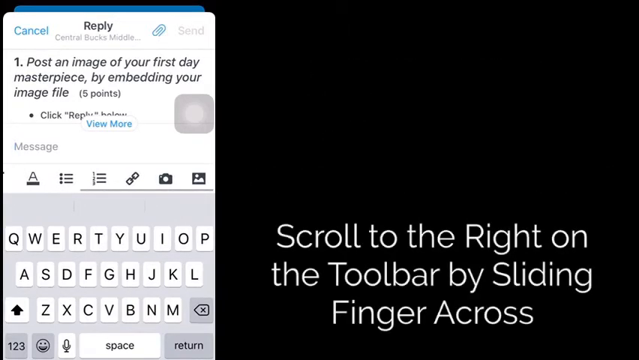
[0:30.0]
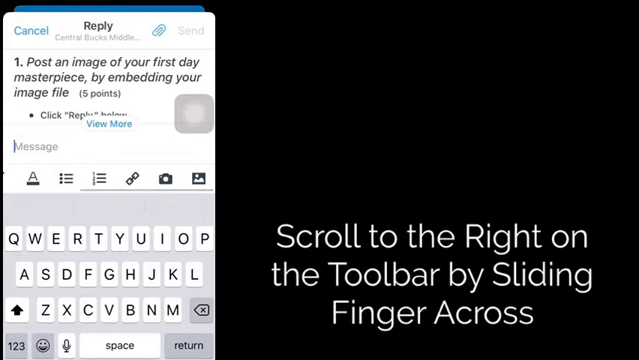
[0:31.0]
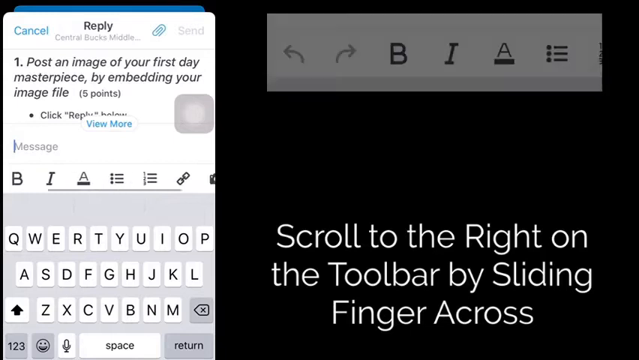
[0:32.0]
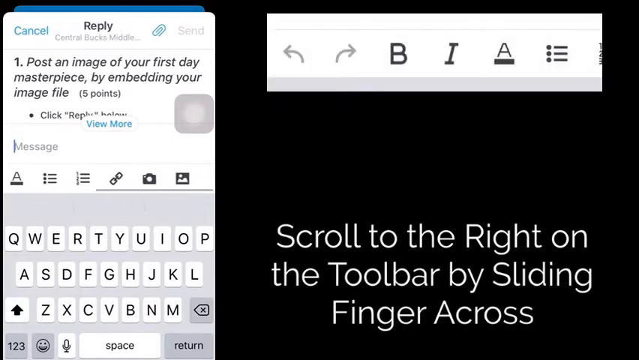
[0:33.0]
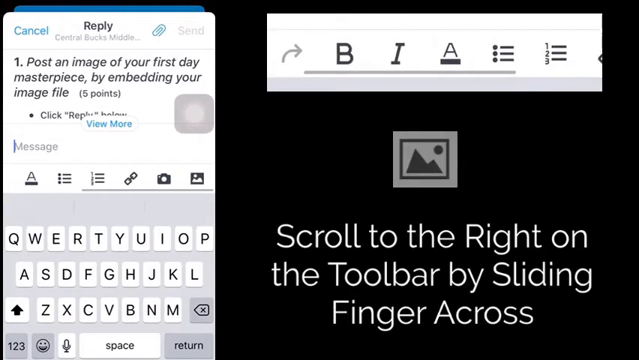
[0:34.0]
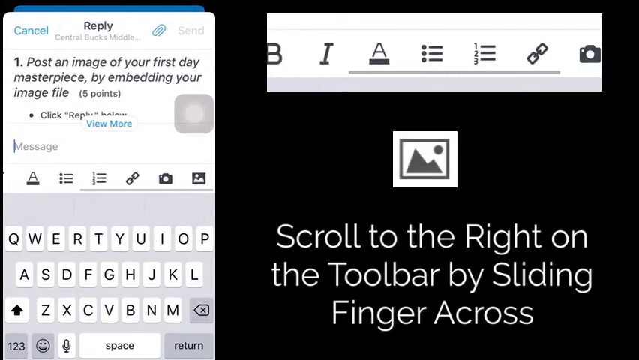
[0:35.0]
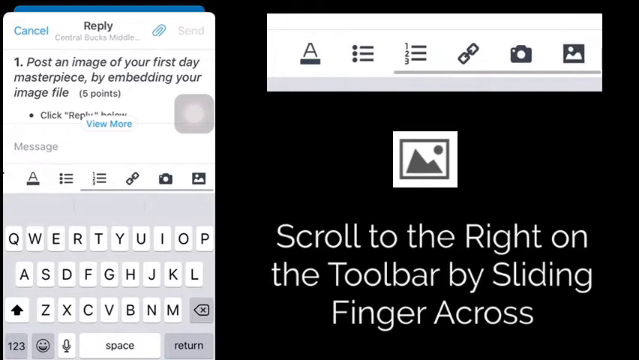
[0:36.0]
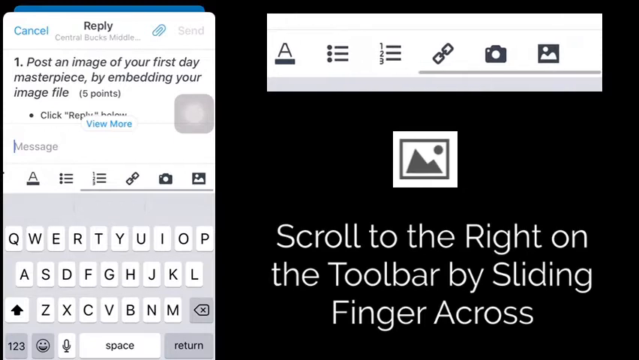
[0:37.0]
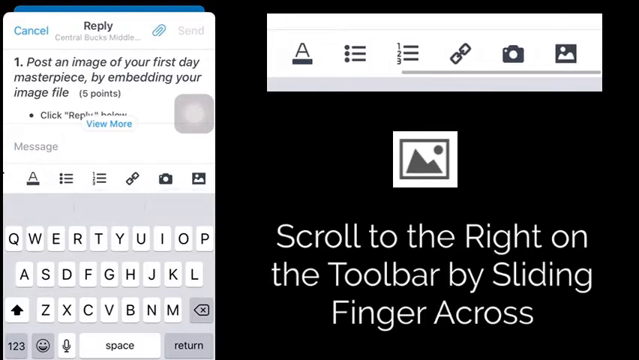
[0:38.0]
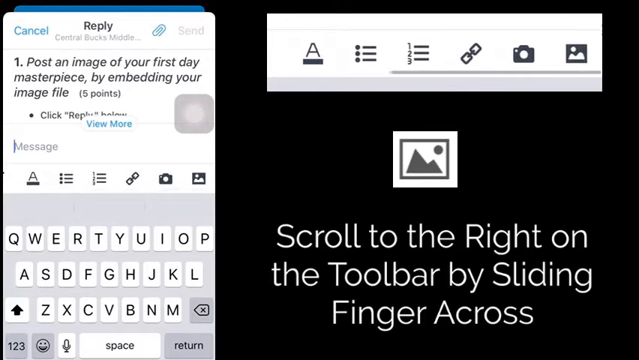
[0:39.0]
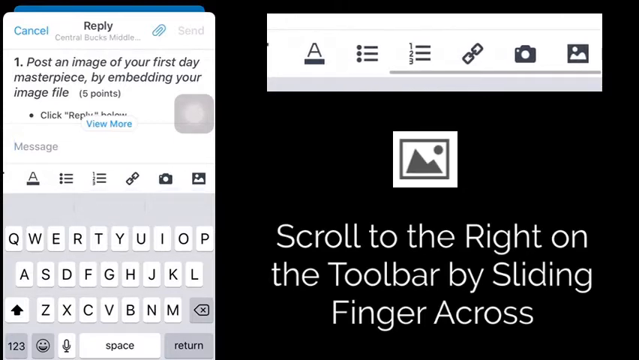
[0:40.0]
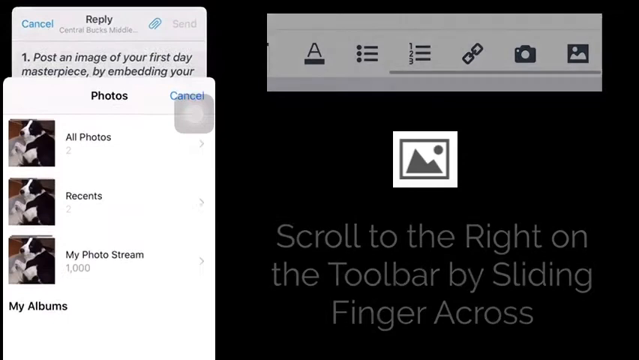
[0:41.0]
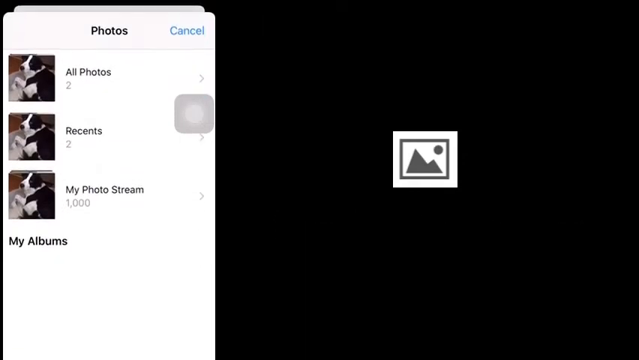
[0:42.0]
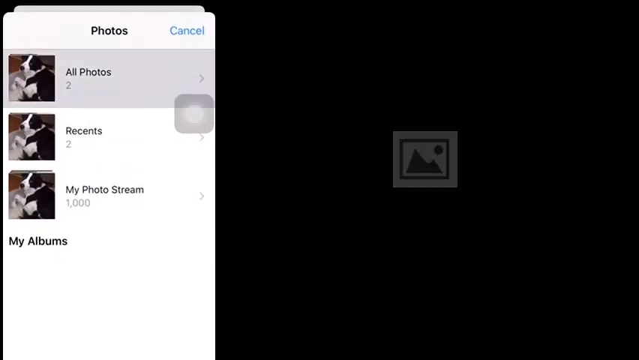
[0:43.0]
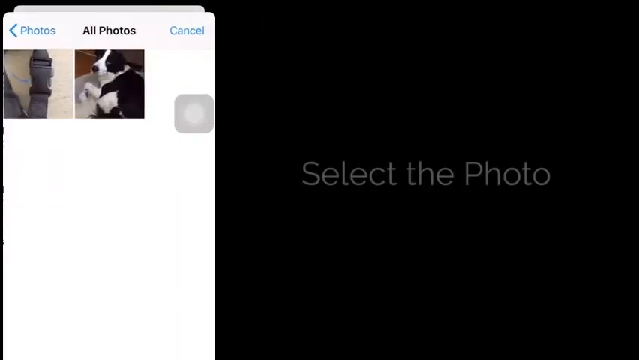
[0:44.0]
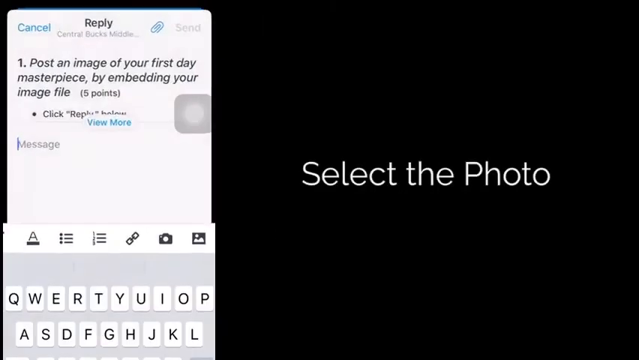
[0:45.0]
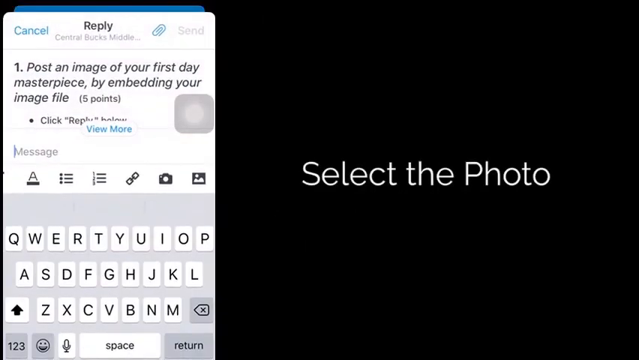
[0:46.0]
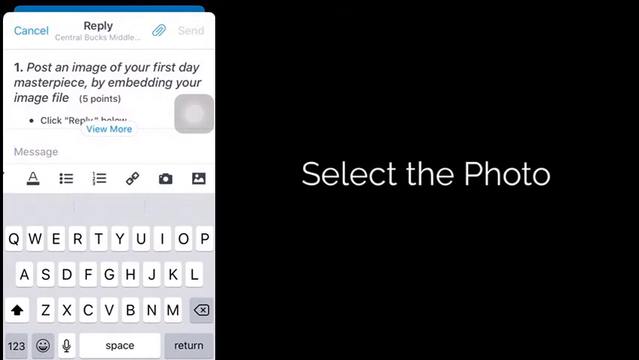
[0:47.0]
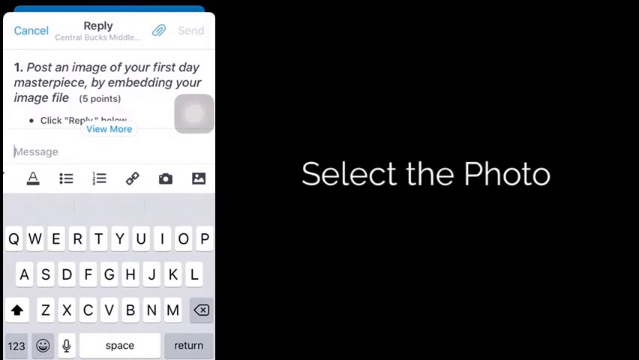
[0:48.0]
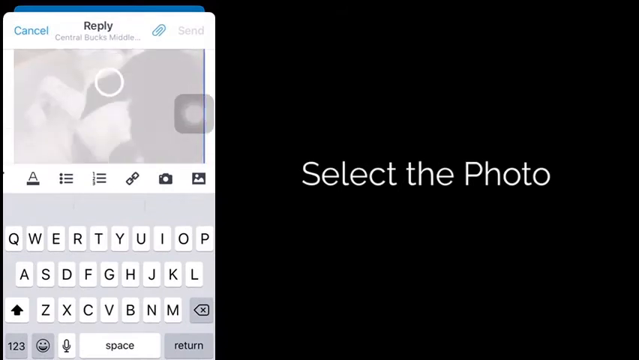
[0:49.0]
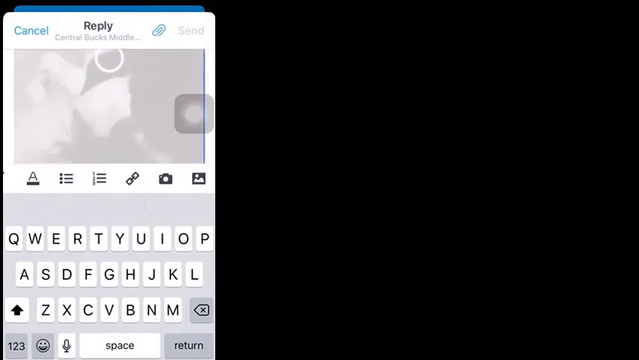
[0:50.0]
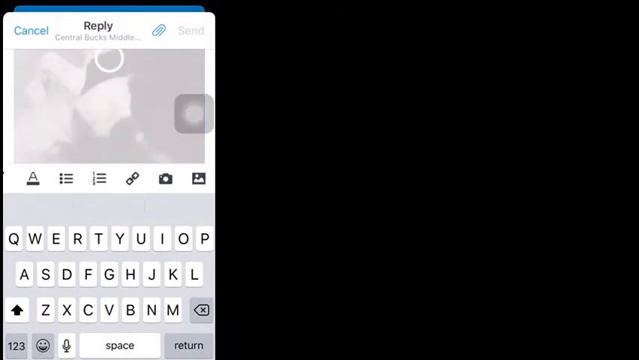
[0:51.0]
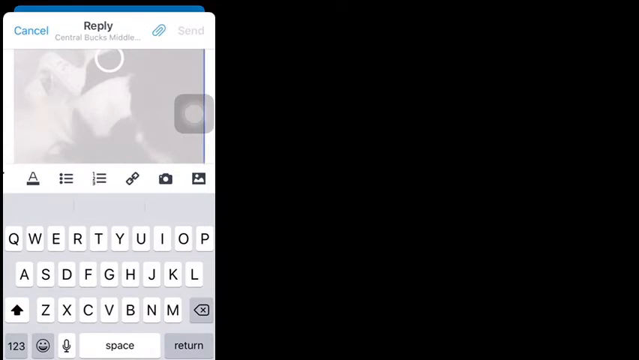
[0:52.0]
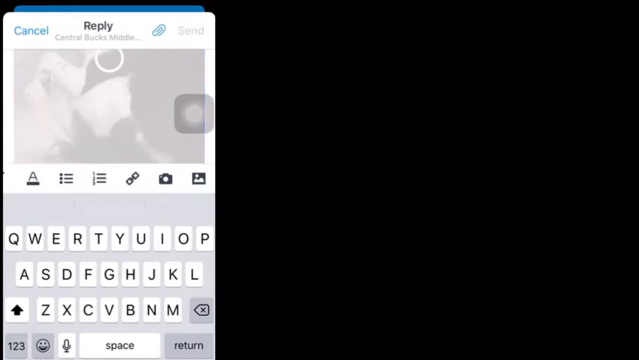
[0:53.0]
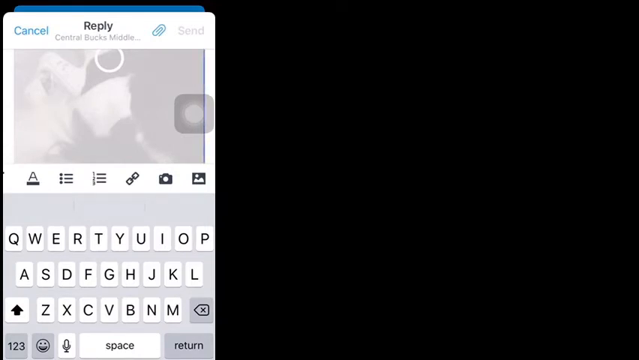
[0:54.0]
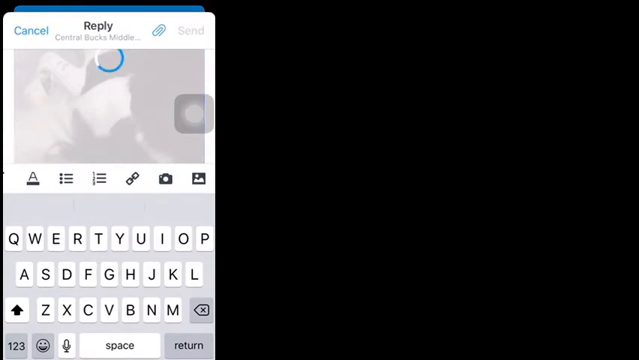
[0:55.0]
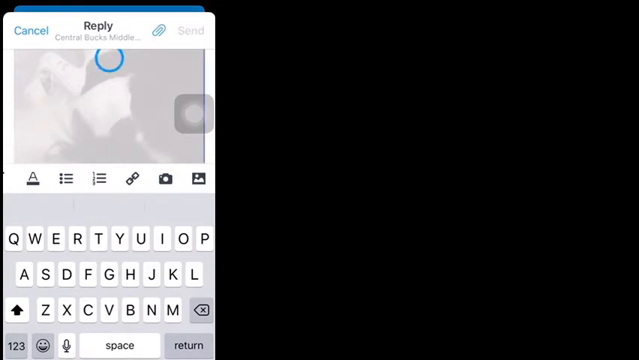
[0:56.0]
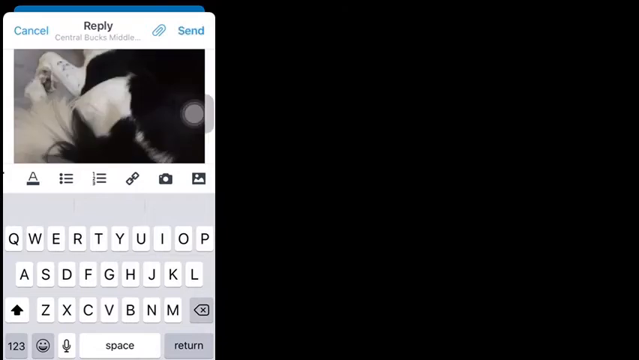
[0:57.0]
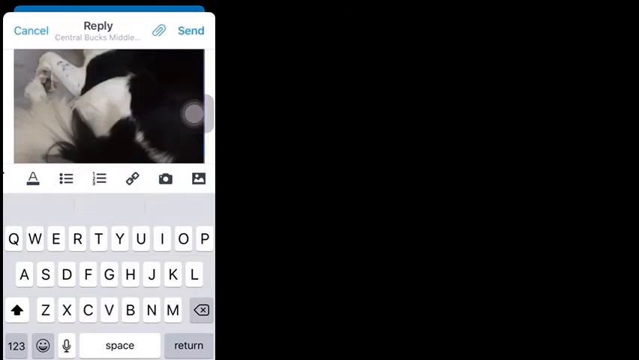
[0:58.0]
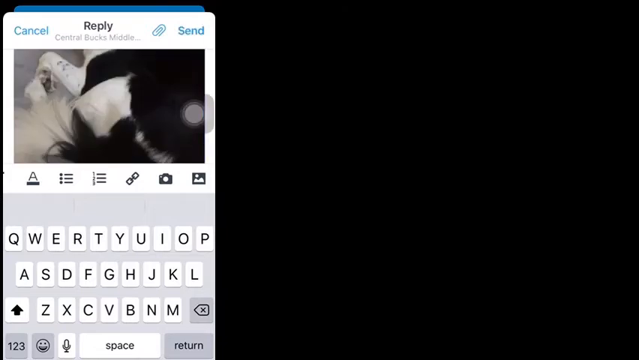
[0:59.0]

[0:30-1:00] The phone screen is back at the top of the page, showing only "post an image of your first day masterpiece by embedding your image file", five points, and the bulleted "click Reply below". The rest of the phone screen is taken up by a keyboard at the bottom, covering about half of the left side, and above it a toolbar with return, bold, italics and capitals, plus two sets of horizontal lines that might indicate bullet points or numbers, and above that a free text area for typing a message. On the right two thirds of the screen, the background is black, and at the bottom is the text "Scroll to the right on the toolbar by sliding finger across", with a copy of the toolbar shown above it. A finger slides across, scrolling the toolbar to the right, revealing, after the three horizontal lines with 1, 2, 3 next to them, a chain symbol of two links with a line connecting them, a camera option, and what appears to be a photo option. The toolbar moves back slightly, there is a click, and the Photos option comes up, with the heading "Photos" and "Cancel". Three options run down the left side, each with a picture of a black and white puppy reclining on its front in a square photo frame: "All Photos" 2, below that "Recents" 2, and third "My Photo Stream" 1,000.